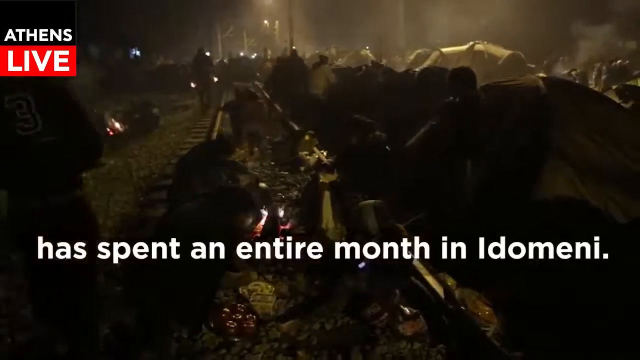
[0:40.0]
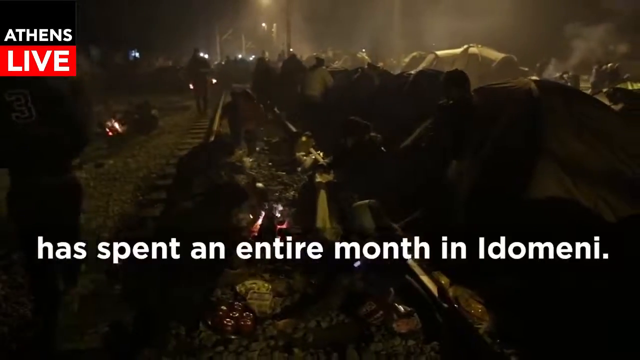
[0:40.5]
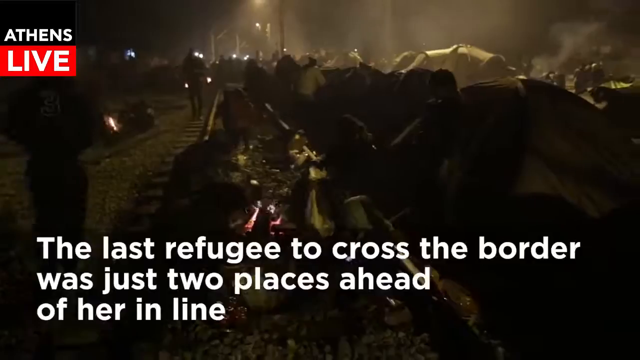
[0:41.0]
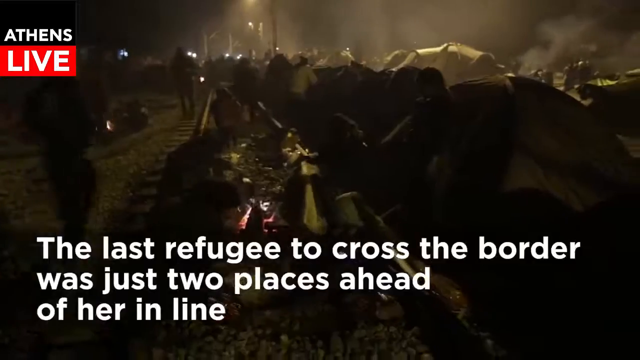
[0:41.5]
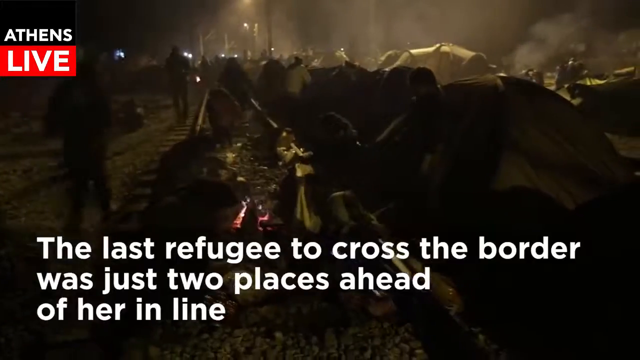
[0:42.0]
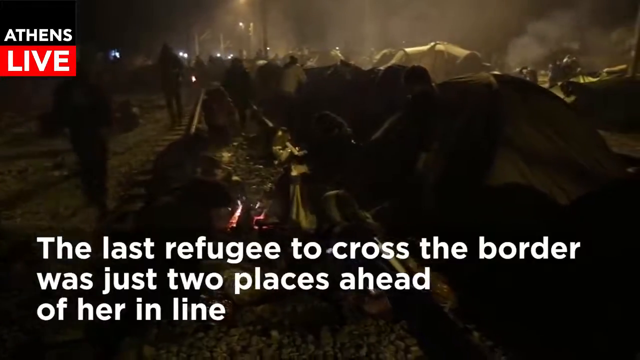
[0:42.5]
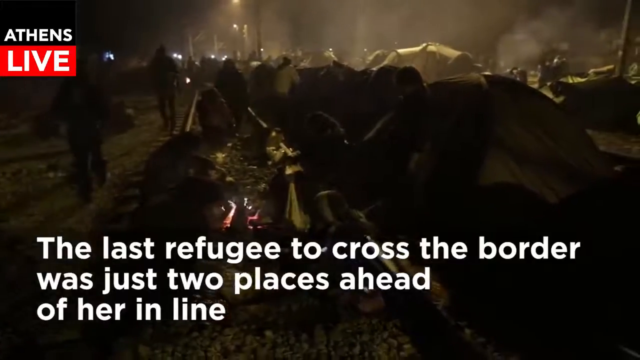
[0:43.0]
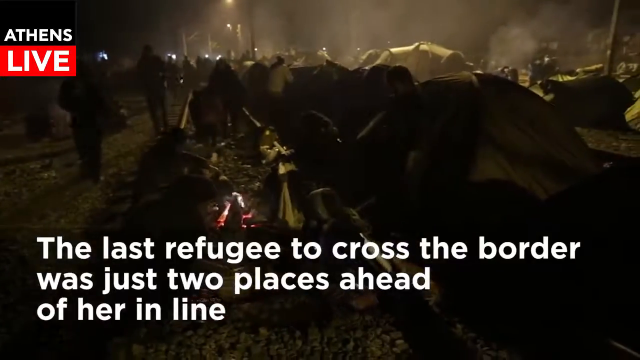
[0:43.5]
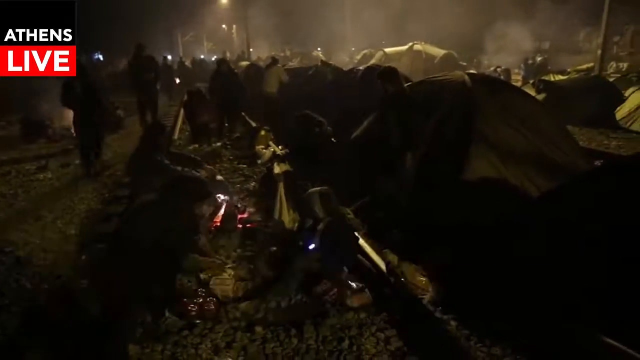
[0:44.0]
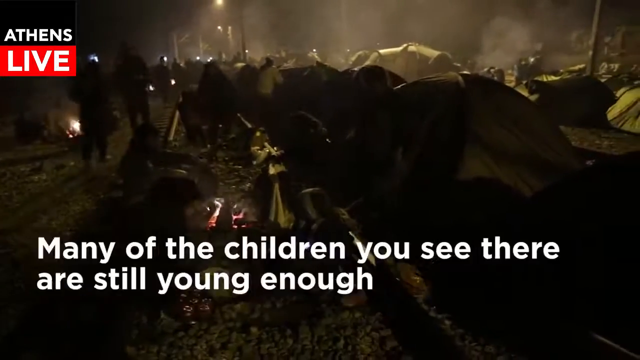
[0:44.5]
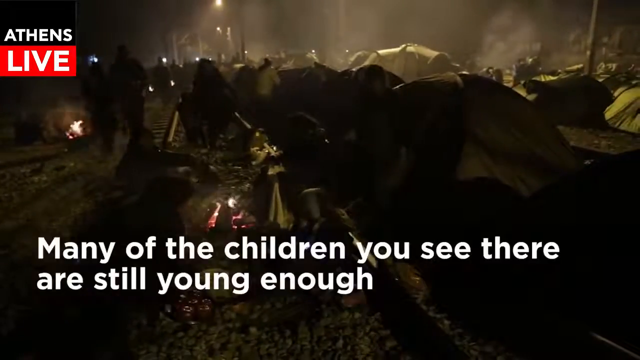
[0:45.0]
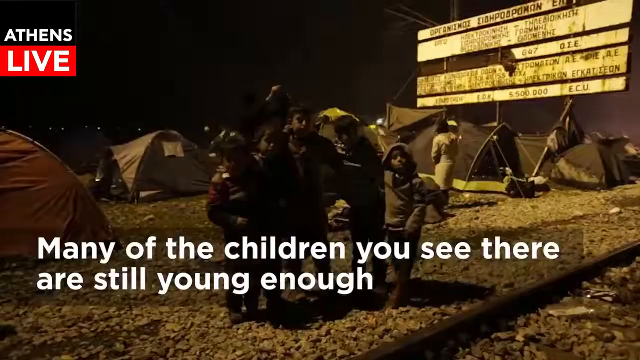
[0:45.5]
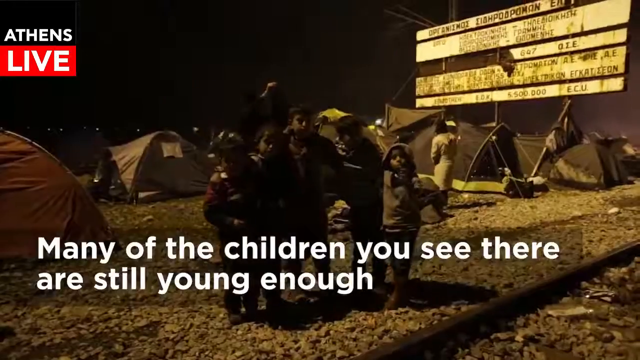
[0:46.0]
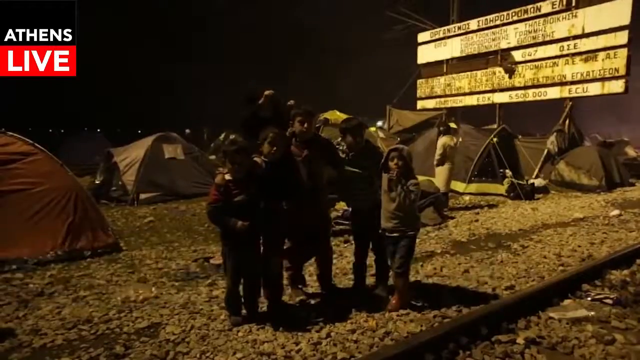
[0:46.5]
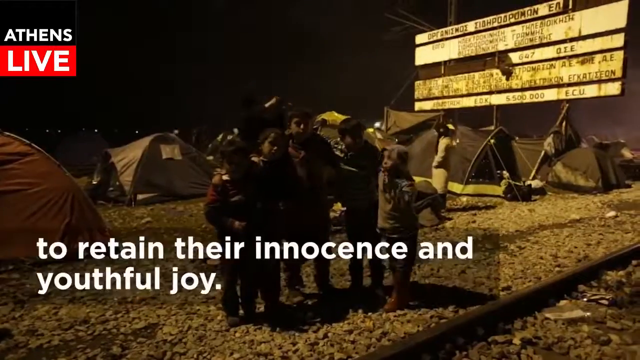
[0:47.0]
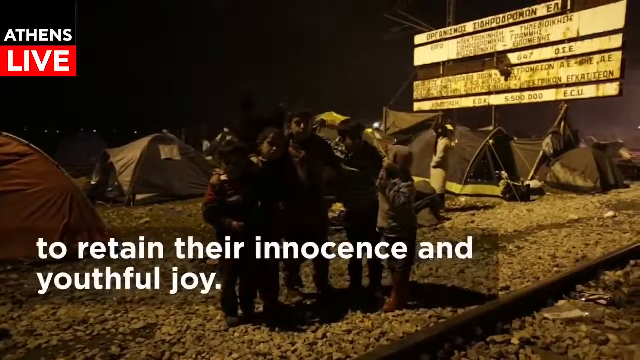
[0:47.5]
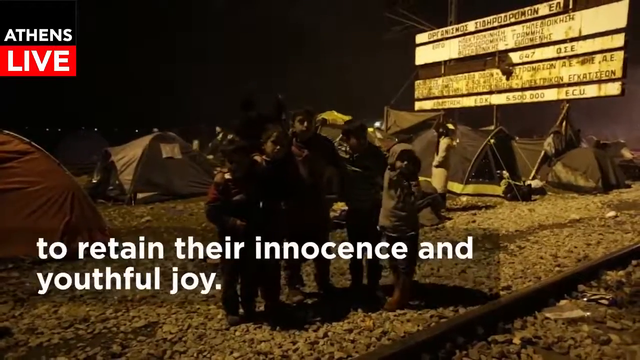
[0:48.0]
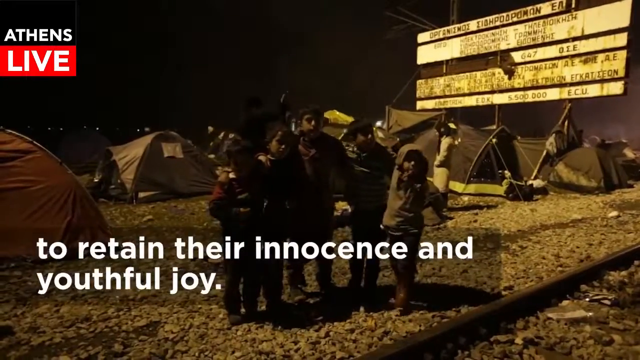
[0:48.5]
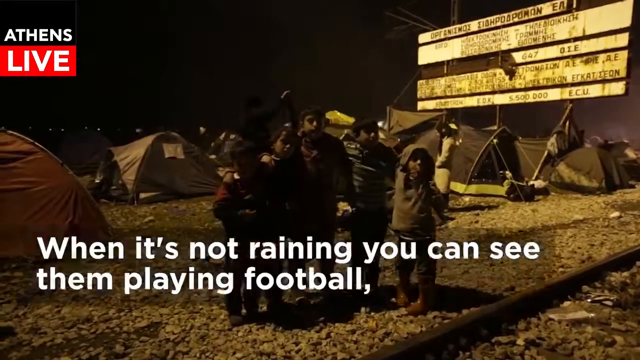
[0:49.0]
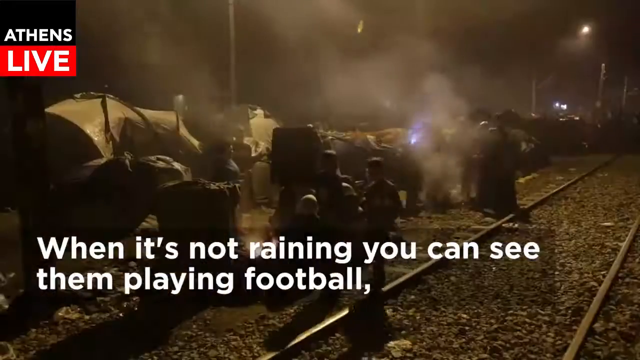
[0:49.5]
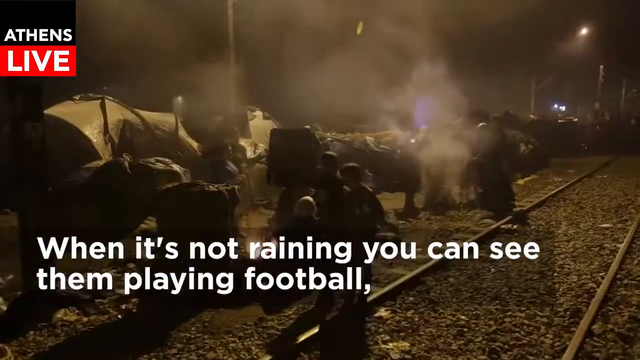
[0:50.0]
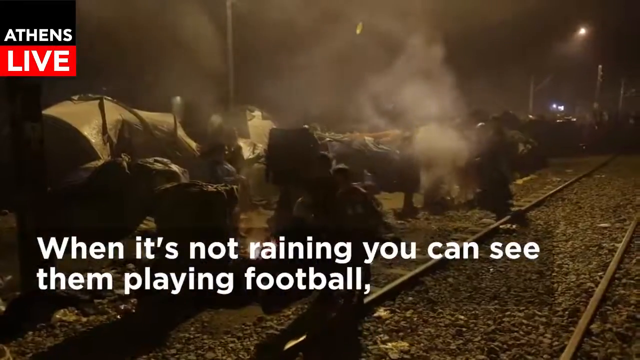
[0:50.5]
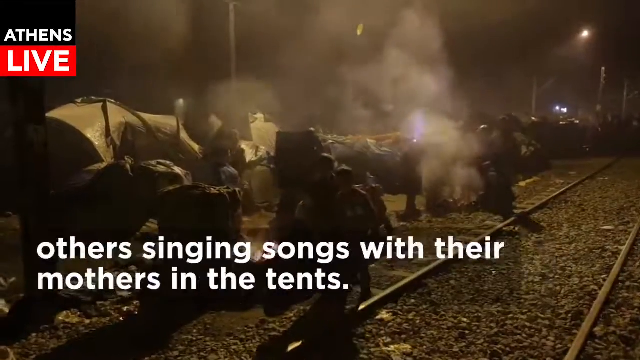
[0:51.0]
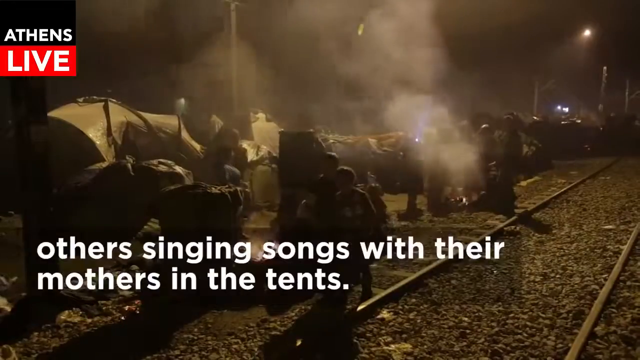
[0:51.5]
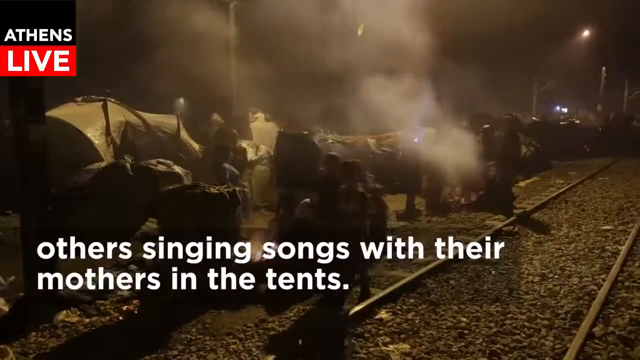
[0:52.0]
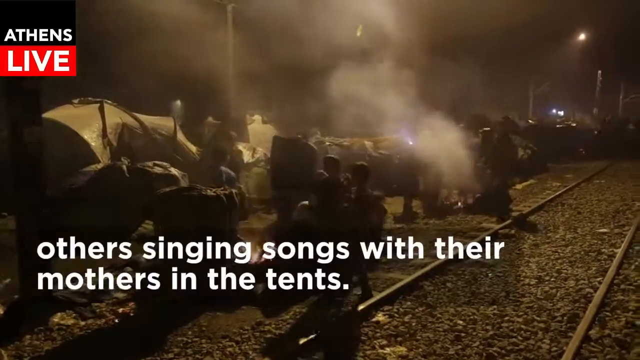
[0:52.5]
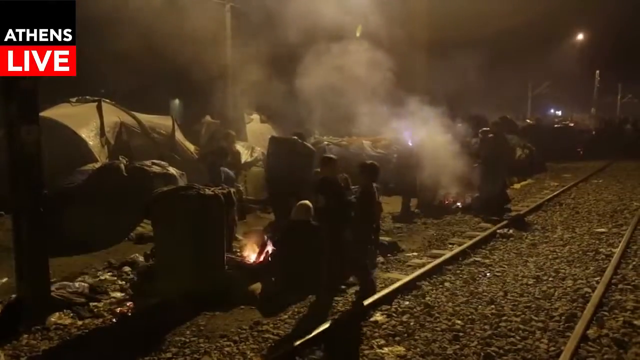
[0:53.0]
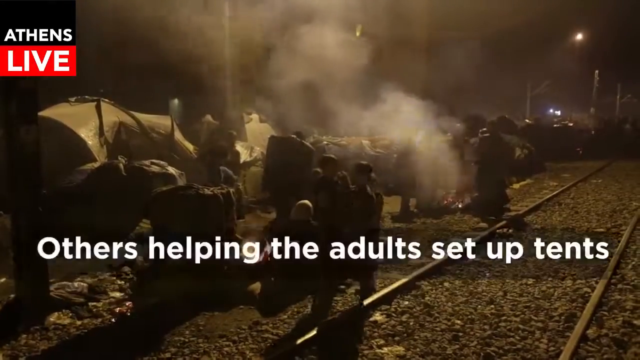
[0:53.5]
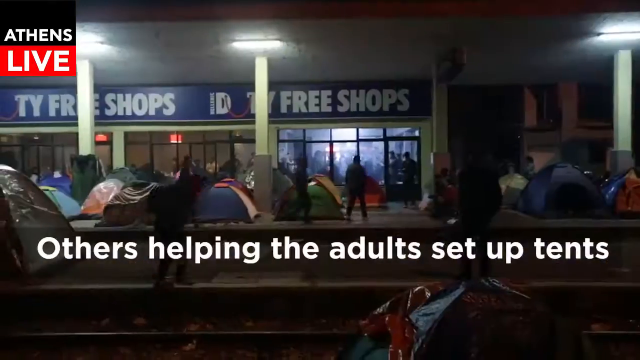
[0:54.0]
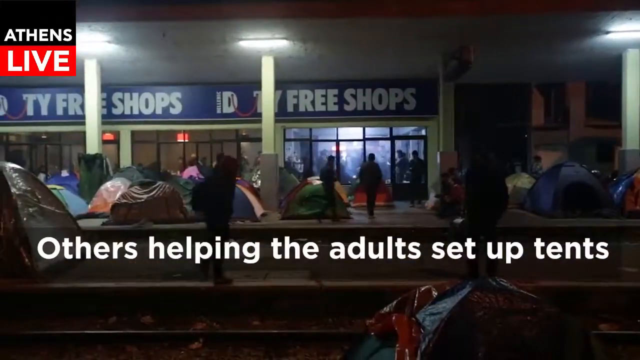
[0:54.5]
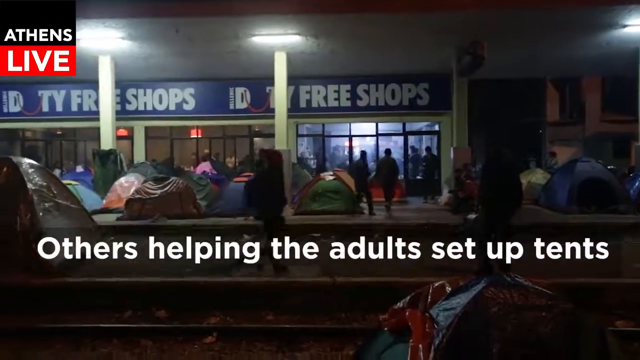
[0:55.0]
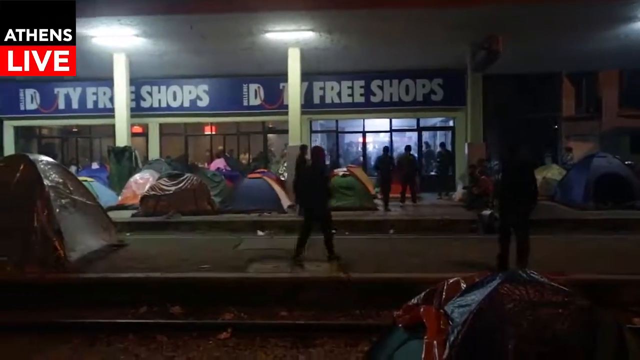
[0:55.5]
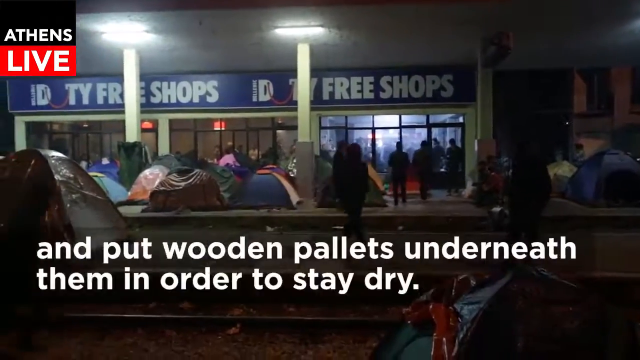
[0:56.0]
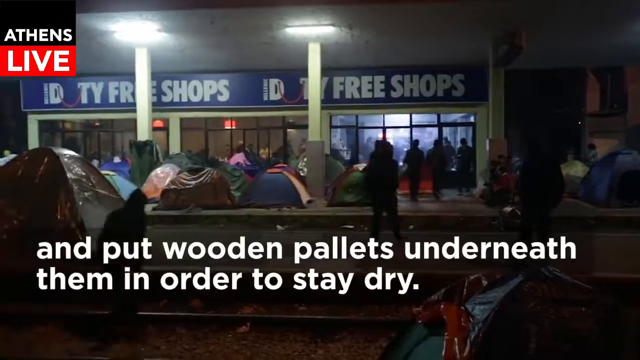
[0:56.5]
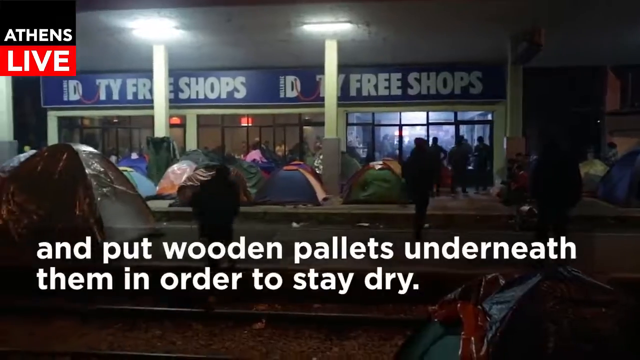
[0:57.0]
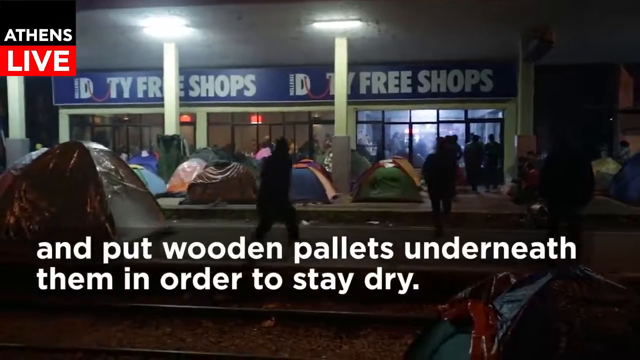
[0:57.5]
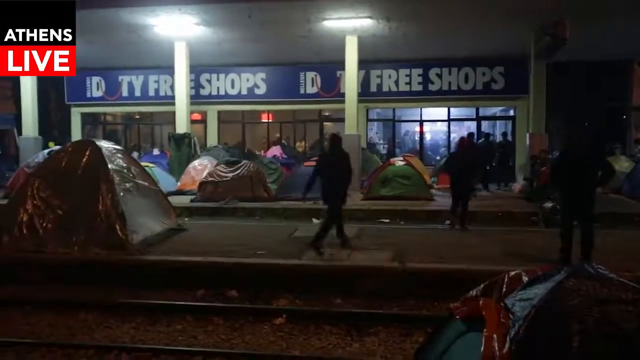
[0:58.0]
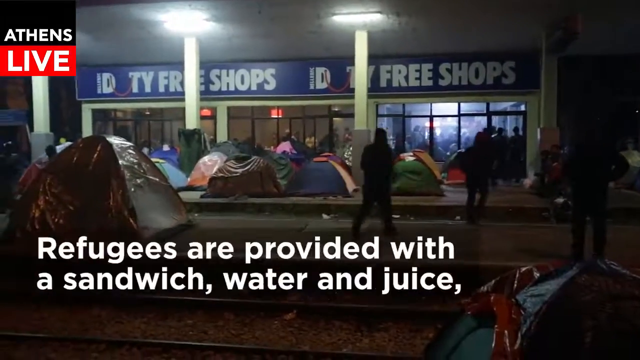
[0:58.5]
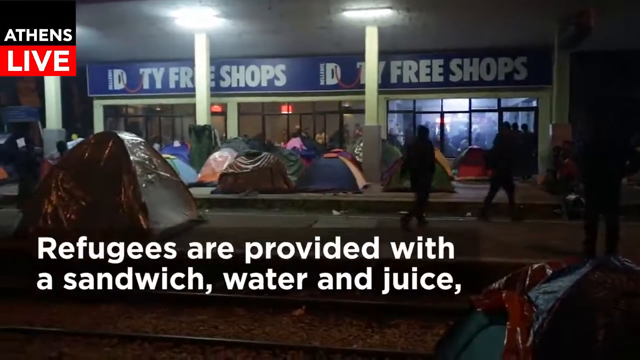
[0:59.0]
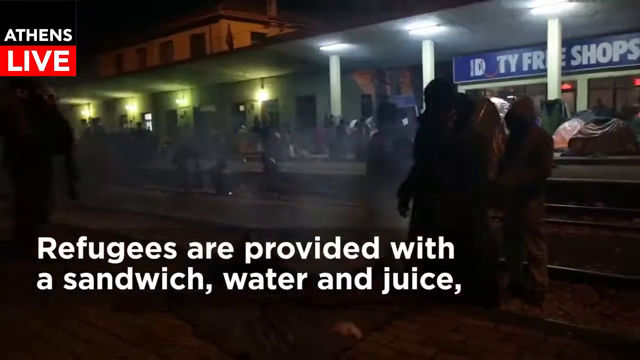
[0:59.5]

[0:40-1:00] Different views and angles show the people in this area and their living conditions: their tents, people sleeping, and people on train tracks with fires set up. Children are together on the train tracks. Everyone seems to be wearing jackets, hoodies and the like, and smoke rises from the fires. People are set up in what looks to be a train station, and there are people inside buildings as well. A caption reads: "Many of the children you see there are still young enough to retain their innocence and their youthful joy. Others singing songs with their mothers in the tents. Others helping the adults set up the tents and put wooden pallets between them in order to stay and survive. Refugees are provided with a sandwich, water, and juice."